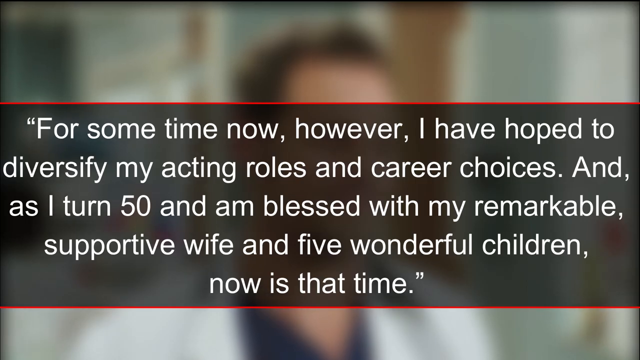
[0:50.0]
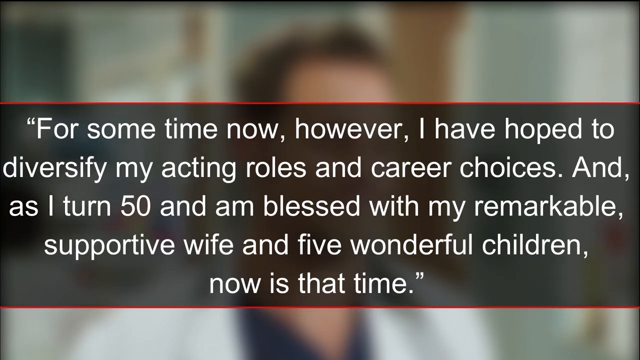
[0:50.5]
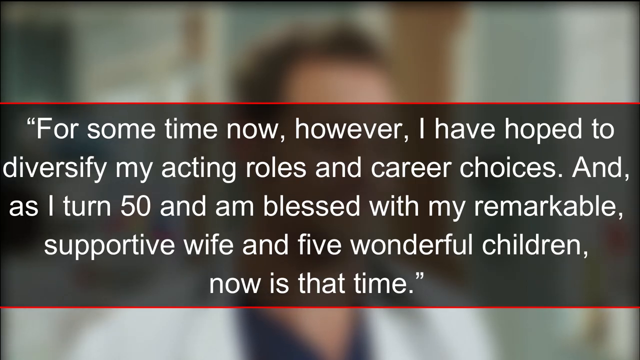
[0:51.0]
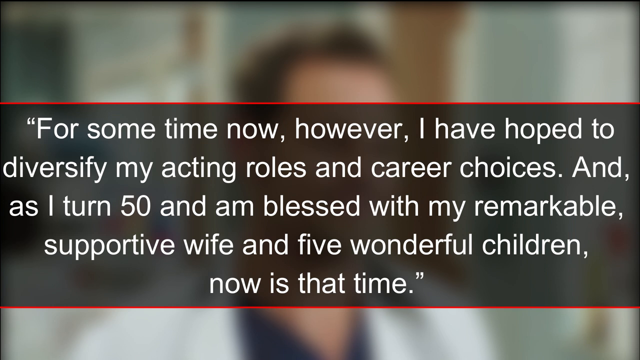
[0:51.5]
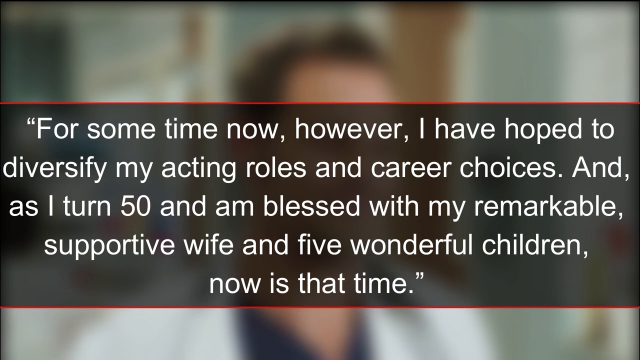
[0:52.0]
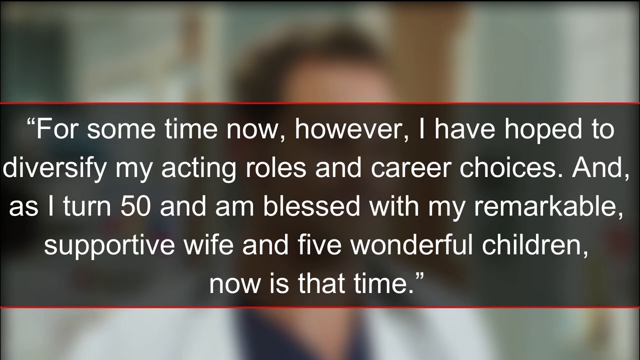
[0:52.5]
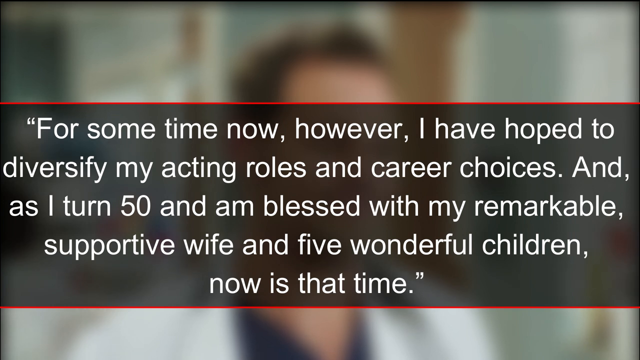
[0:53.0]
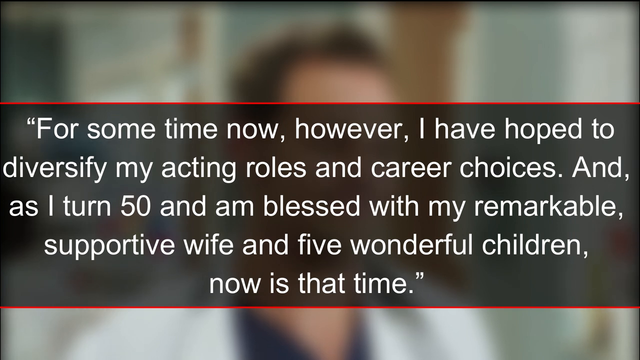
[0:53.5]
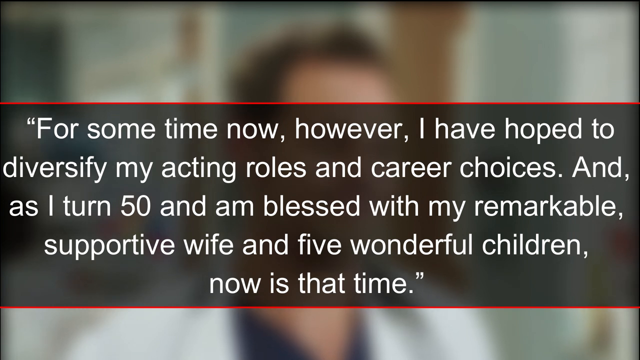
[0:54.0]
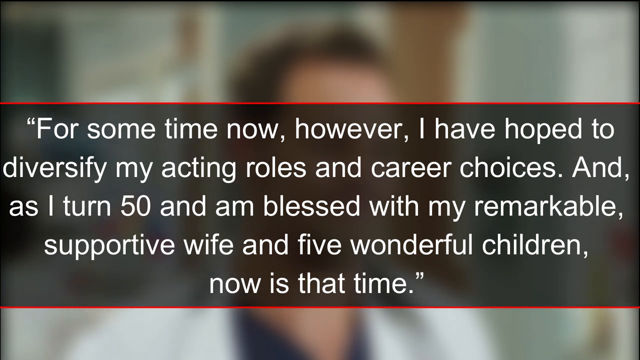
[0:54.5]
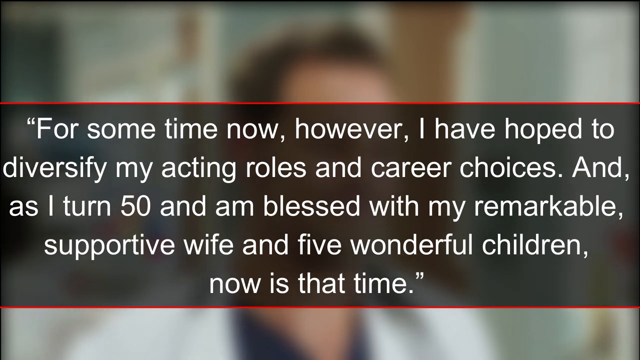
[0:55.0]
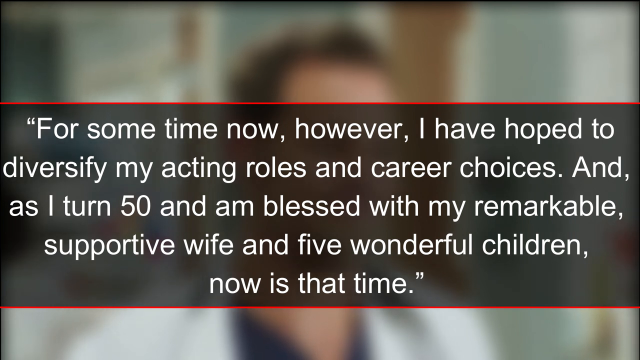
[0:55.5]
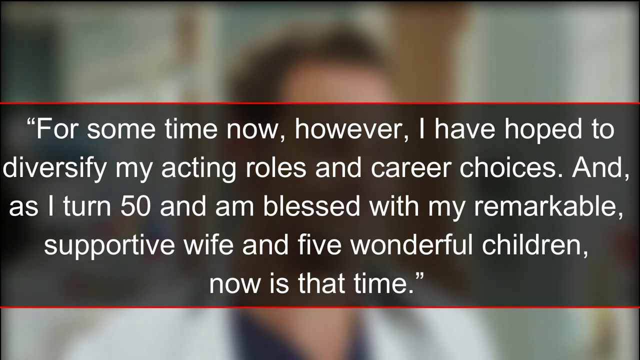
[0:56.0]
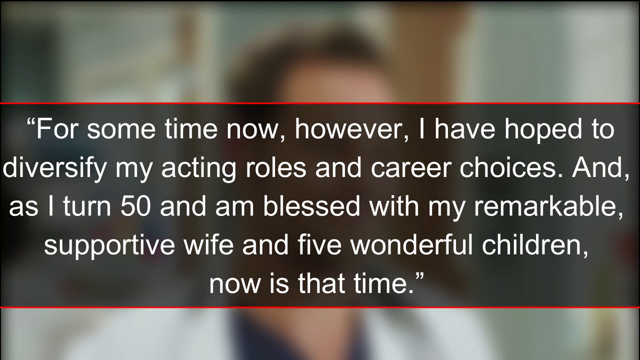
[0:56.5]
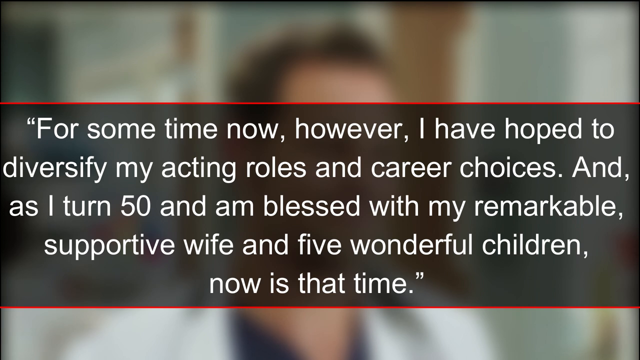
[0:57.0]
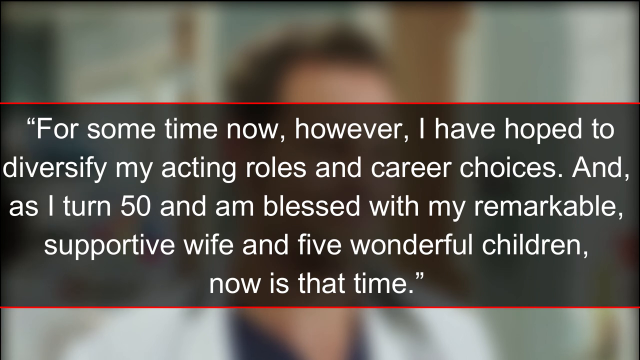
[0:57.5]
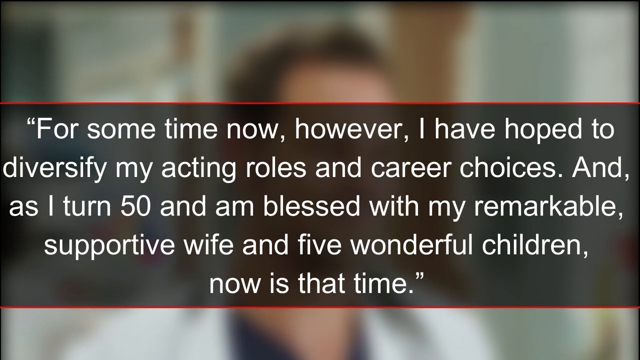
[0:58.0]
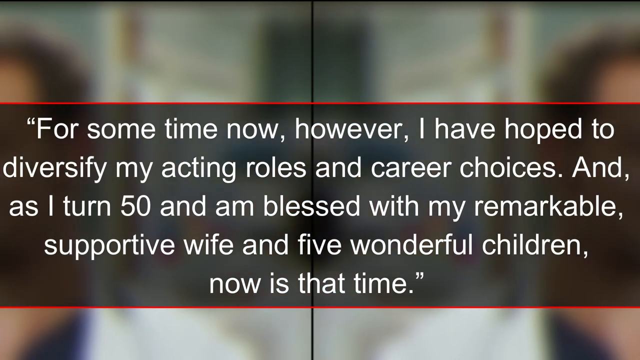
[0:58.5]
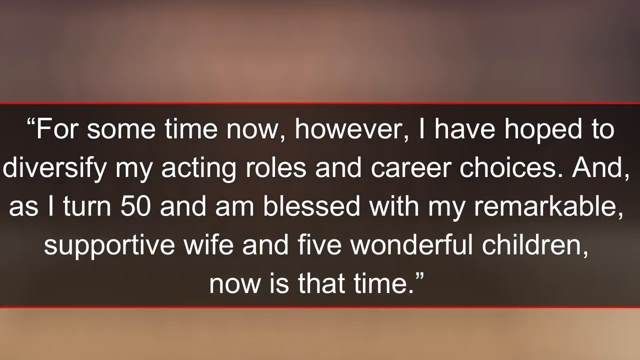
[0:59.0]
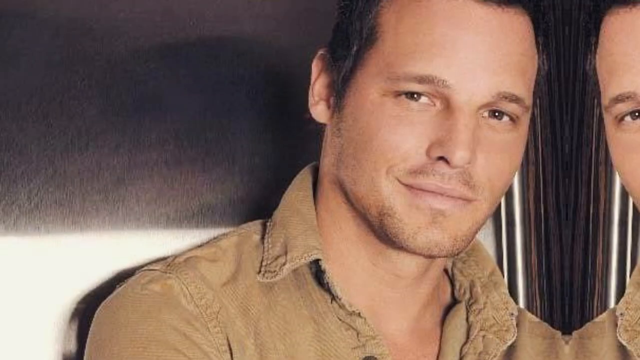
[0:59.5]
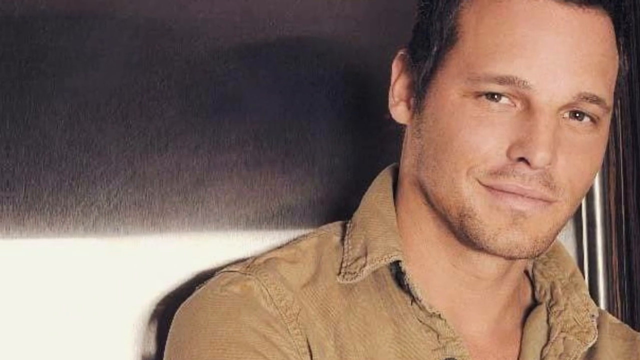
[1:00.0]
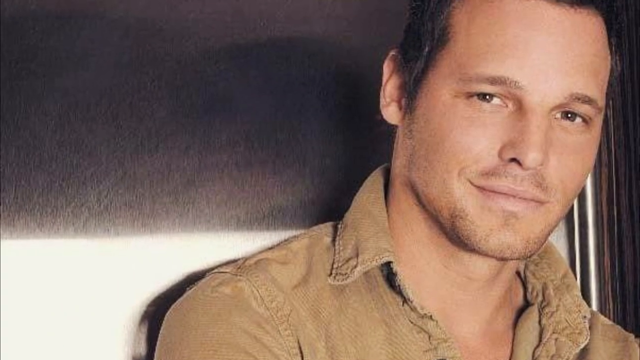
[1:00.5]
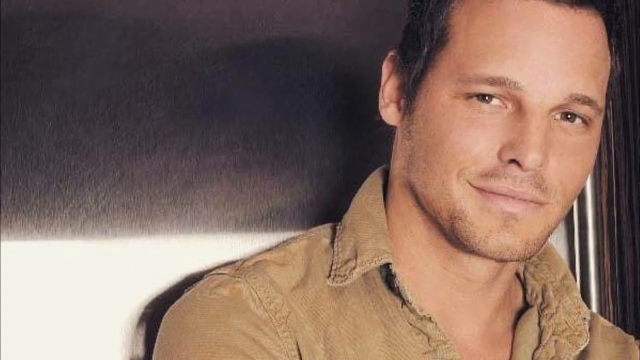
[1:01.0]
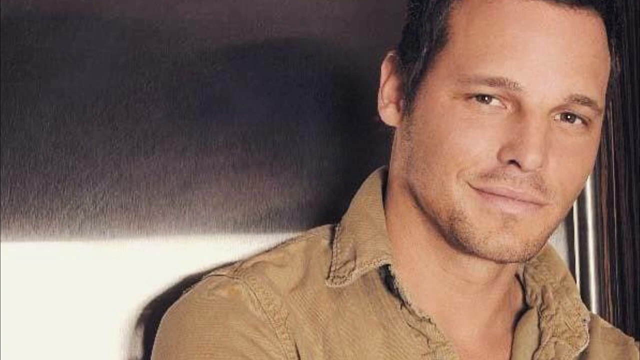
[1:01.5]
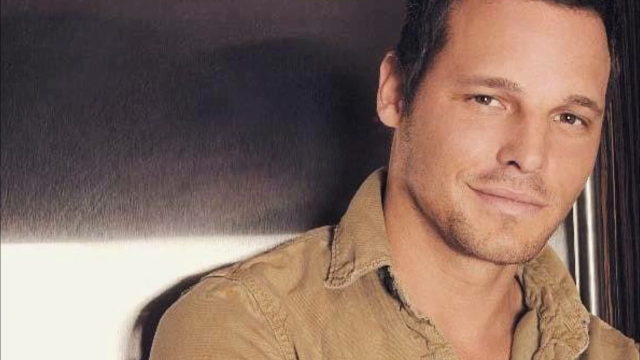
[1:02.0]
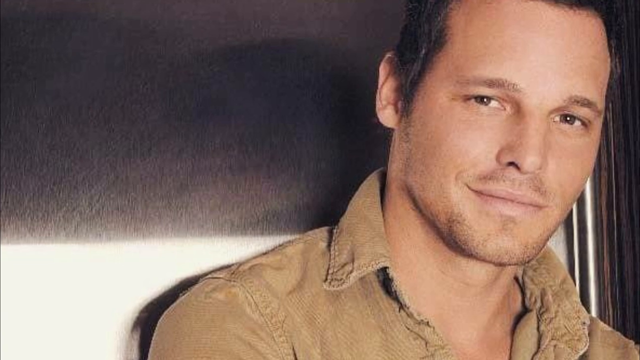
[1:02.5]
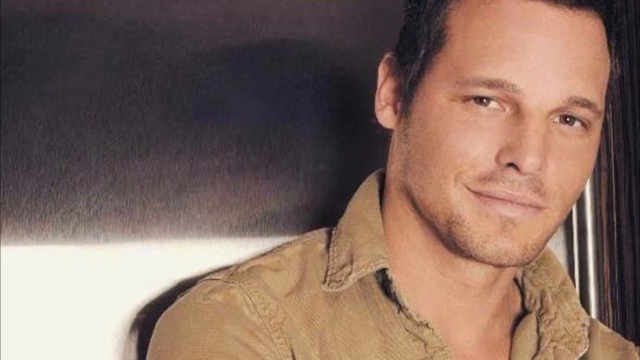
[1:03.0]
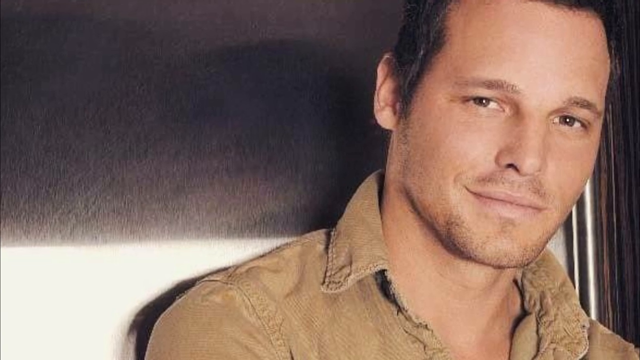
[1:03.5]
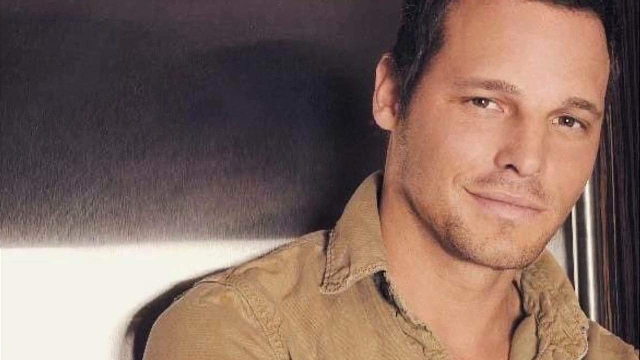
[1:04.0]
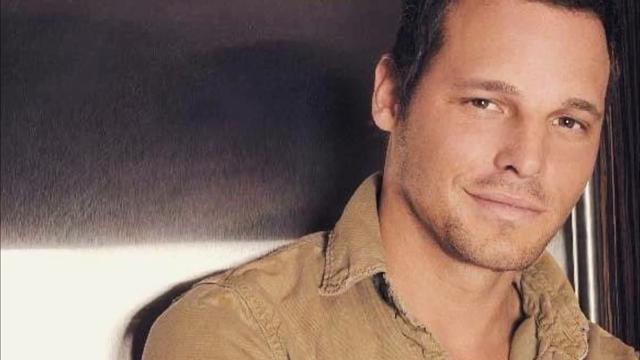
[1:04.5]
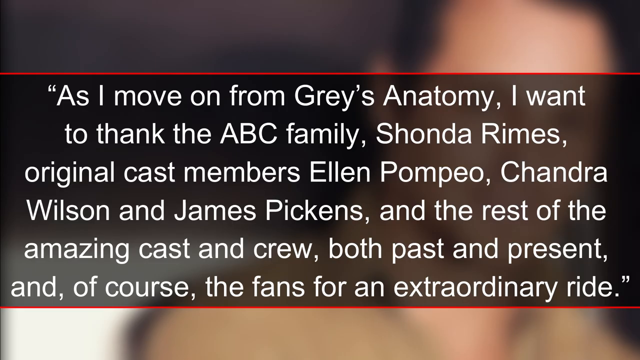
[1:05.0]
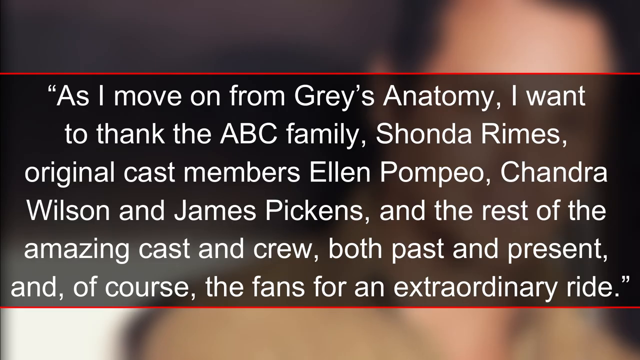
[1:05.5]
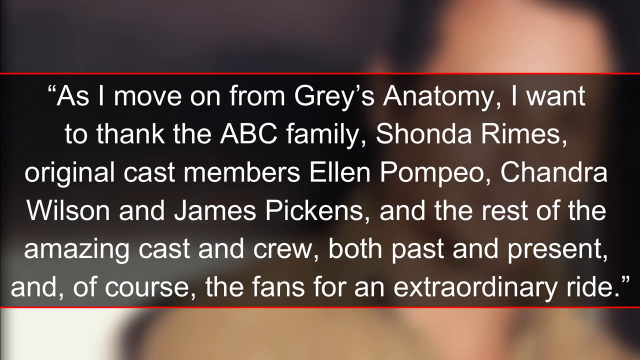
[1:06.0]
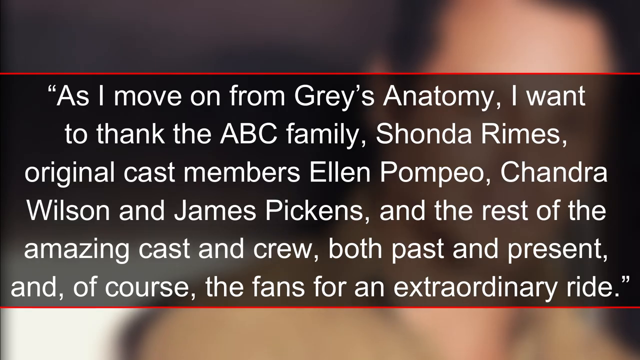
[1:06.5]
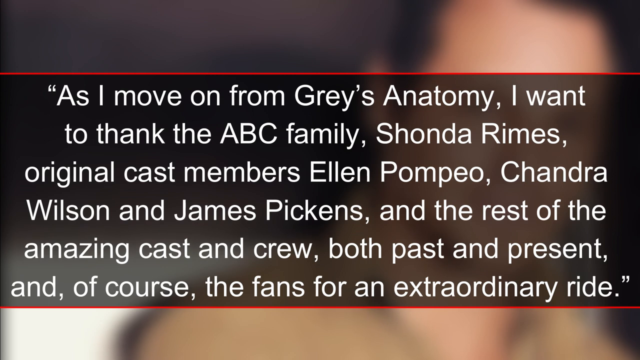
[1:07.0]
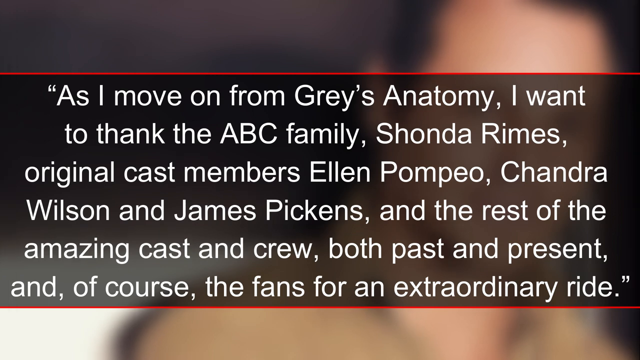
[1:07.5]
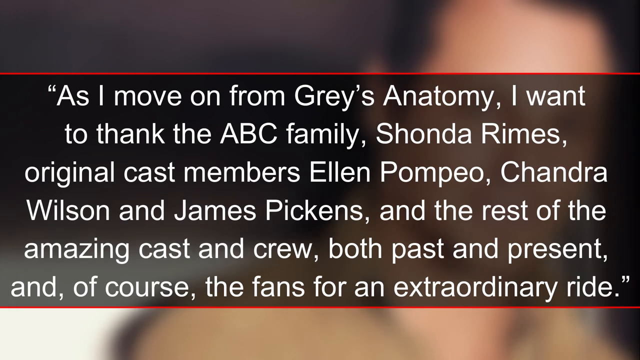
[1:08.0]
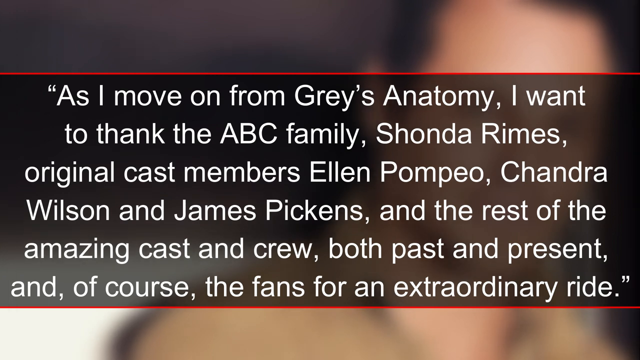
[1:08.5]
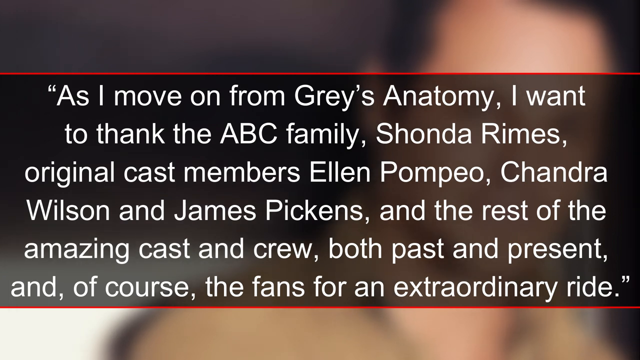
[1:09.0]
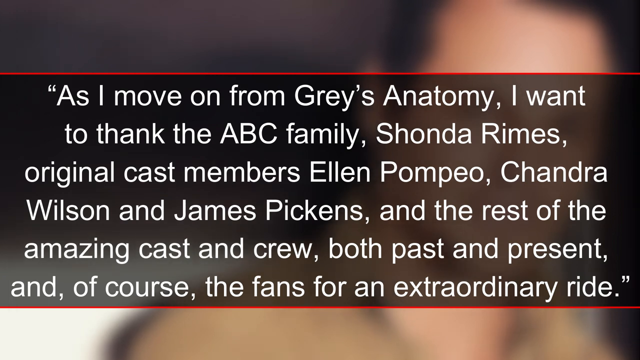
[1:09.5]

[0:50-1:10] Text on the screen says "for some time now, however, I have hoped to diversify my acting roles and career choices and as I turn 50, I am blessed with my remarkable supportive wife and five wonderful children. Now is that time." The text has a semi-translucent dark background with a red line at the top and bottom of all the text. Behind it is a blurred image of a man with short brown hair in a hospital setting, wearing a lab coat and a blue shirt. The video switches to another image of the man, not blurred, wearing a brown shirt, with a bit of a smirk, looking at the camera. It is a still image; he has brown eyes and short brown hair, the background is black and white, and his head is leaning up against a pole. More text appears on the screen: "As I move on from Grey's Anatomy, I want to thank the ABC family, Shonda Rhimes, original cast members Ellen Pompeo, Chandra Wilson, and James Pickens, and the rest of the amazing cast and crew, both past and present, and of course the fans, for an extraordinary ride." The text has a dark background that blurs the image behind it, with a red line at the top and bottom.